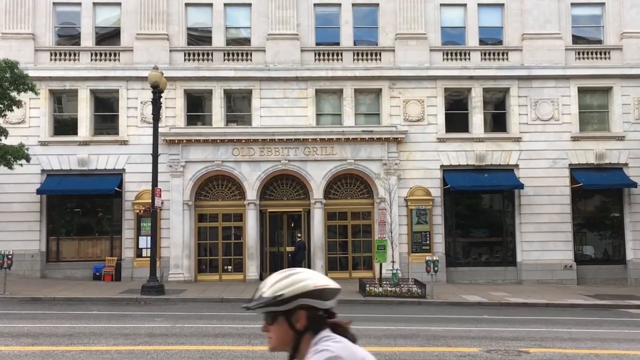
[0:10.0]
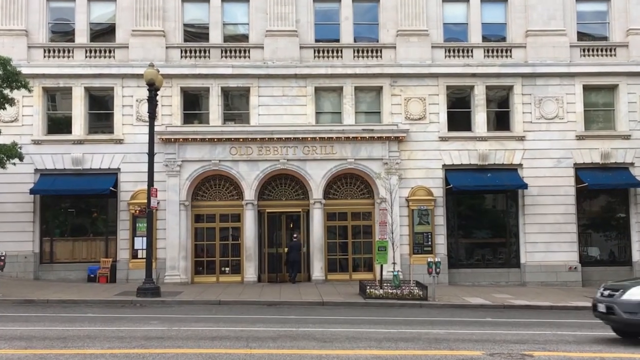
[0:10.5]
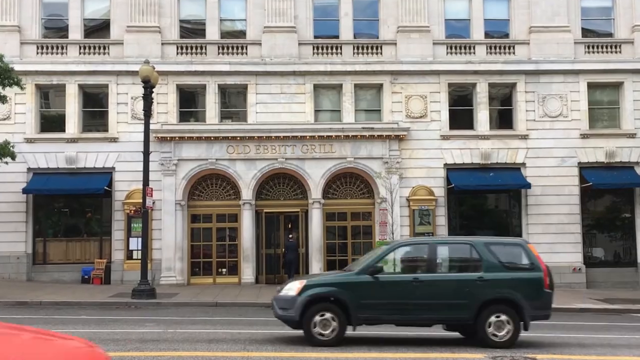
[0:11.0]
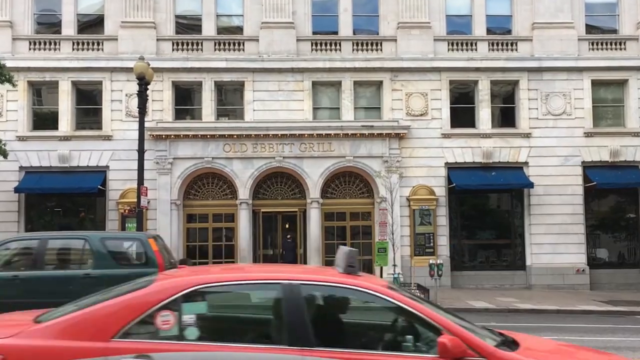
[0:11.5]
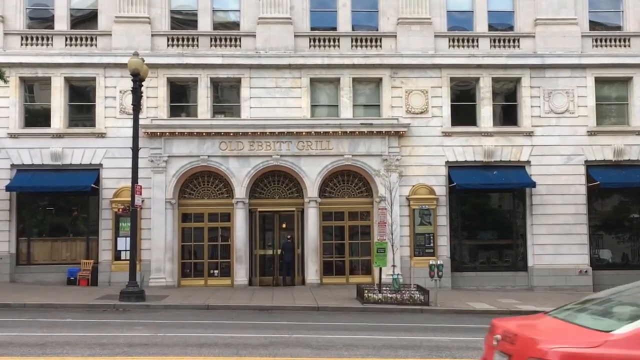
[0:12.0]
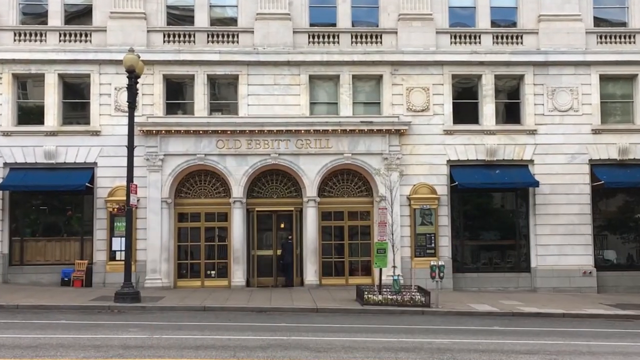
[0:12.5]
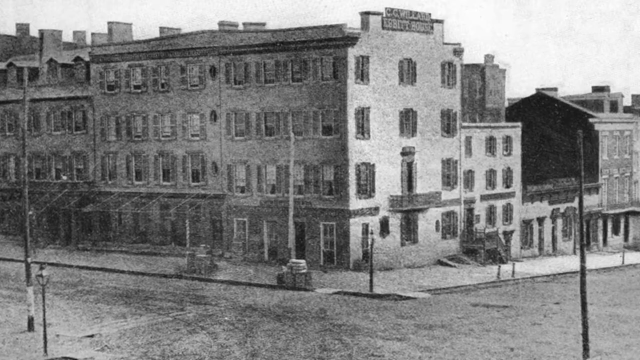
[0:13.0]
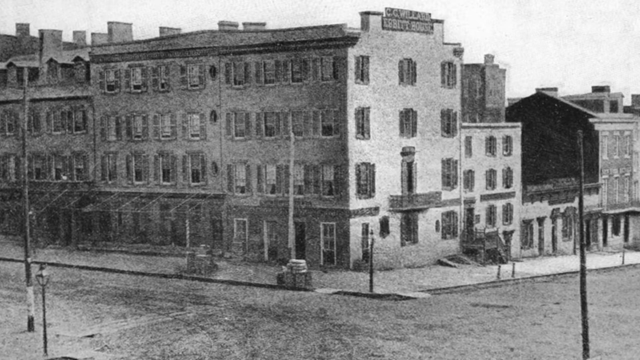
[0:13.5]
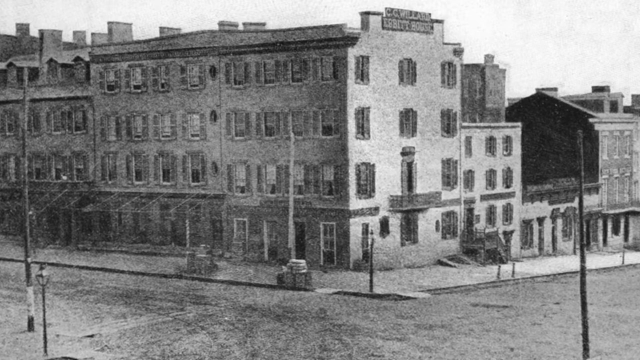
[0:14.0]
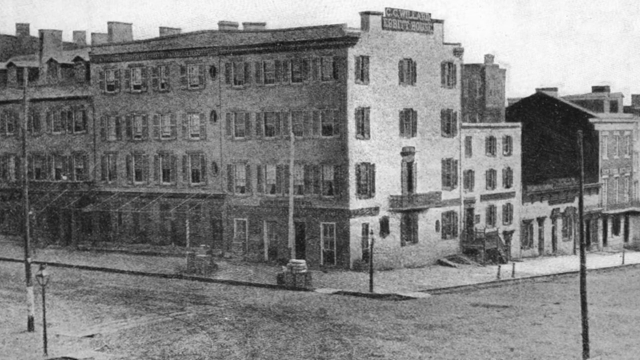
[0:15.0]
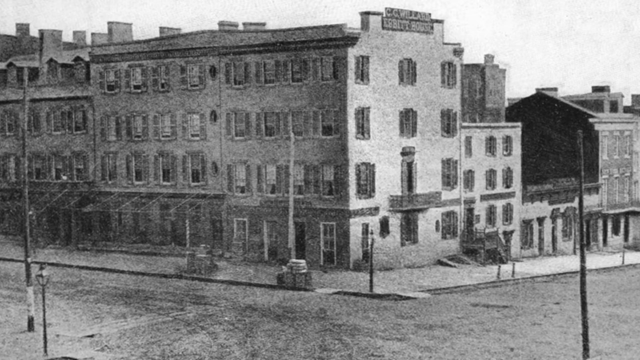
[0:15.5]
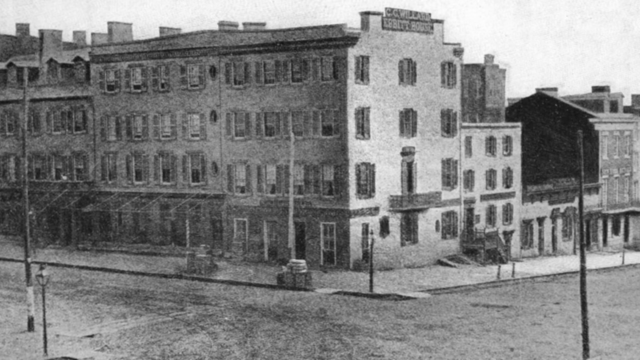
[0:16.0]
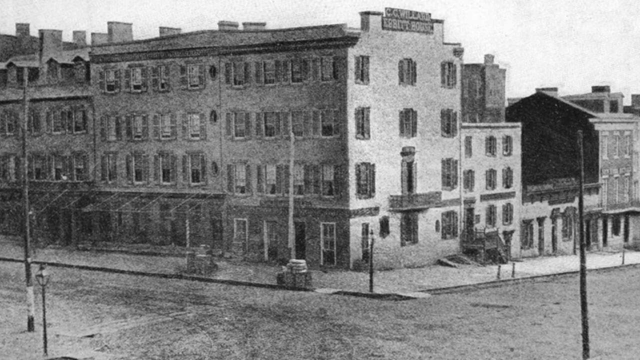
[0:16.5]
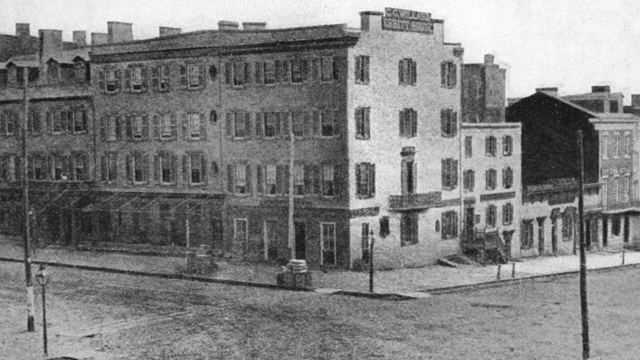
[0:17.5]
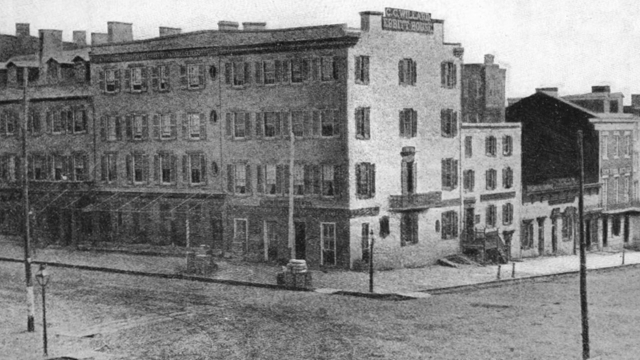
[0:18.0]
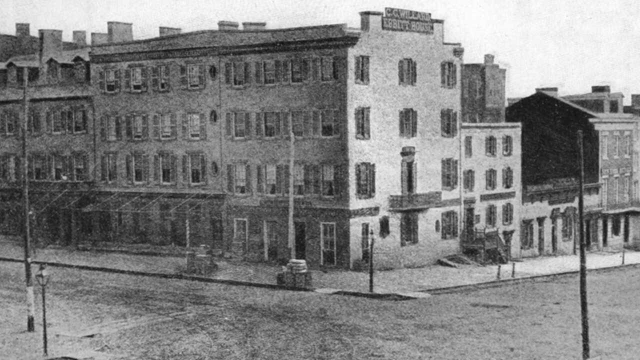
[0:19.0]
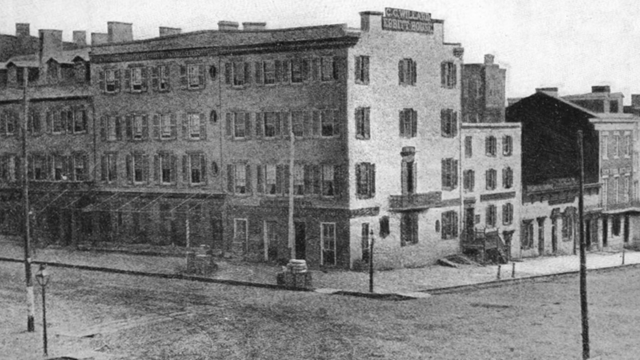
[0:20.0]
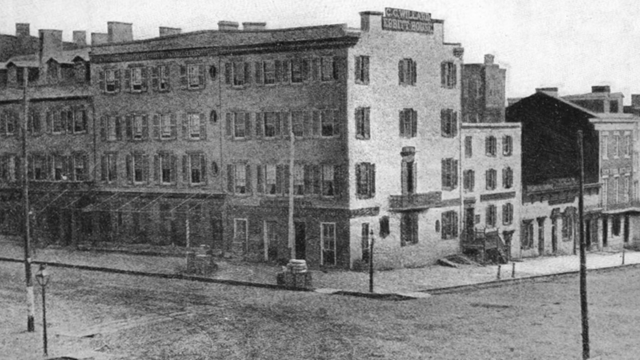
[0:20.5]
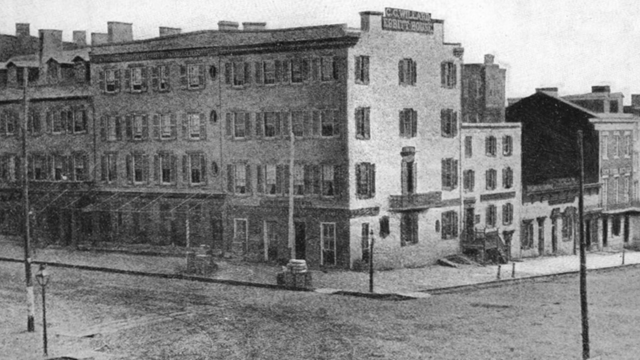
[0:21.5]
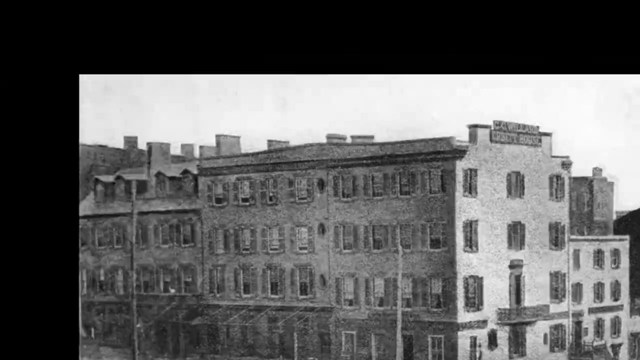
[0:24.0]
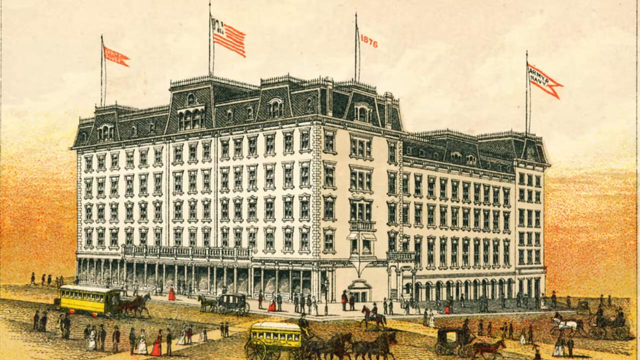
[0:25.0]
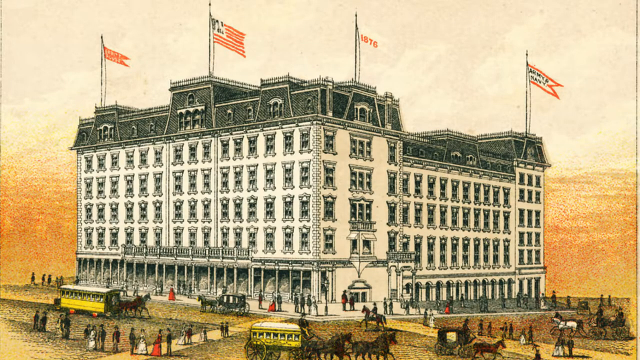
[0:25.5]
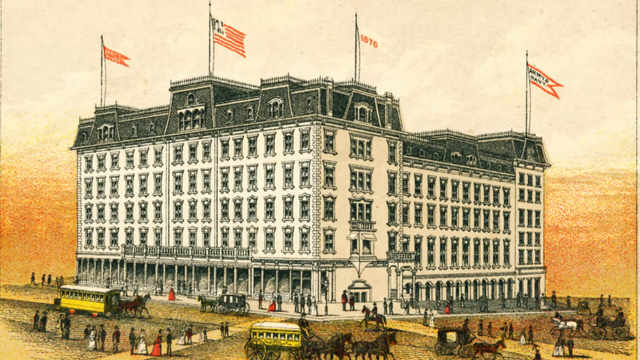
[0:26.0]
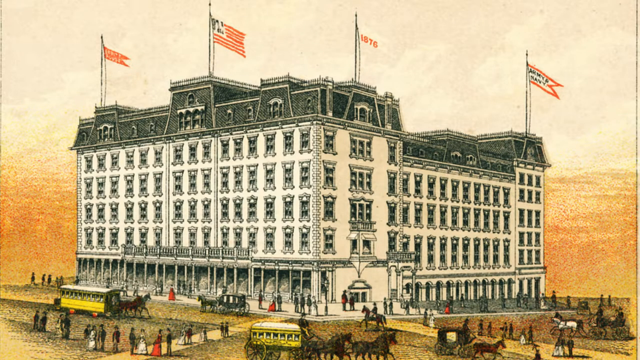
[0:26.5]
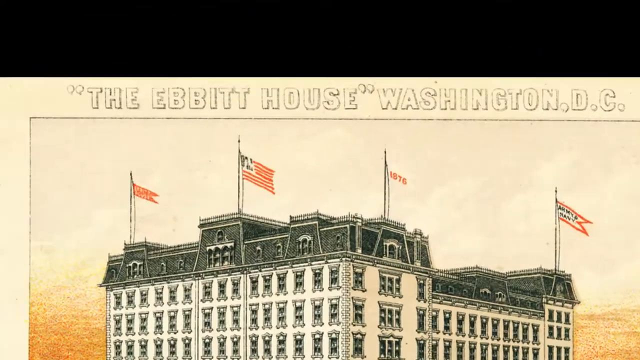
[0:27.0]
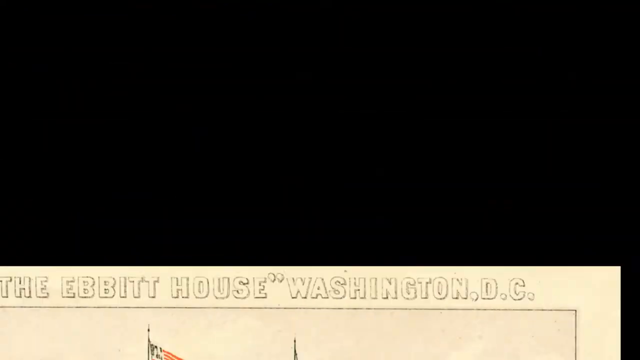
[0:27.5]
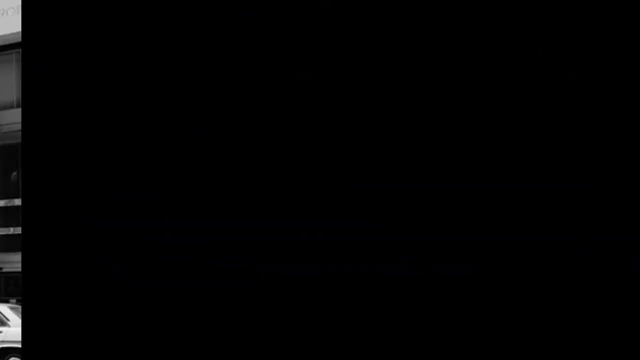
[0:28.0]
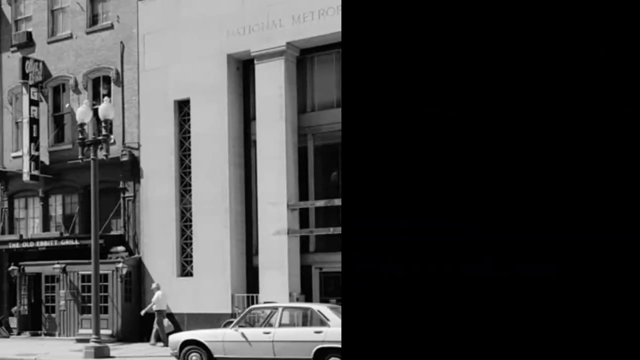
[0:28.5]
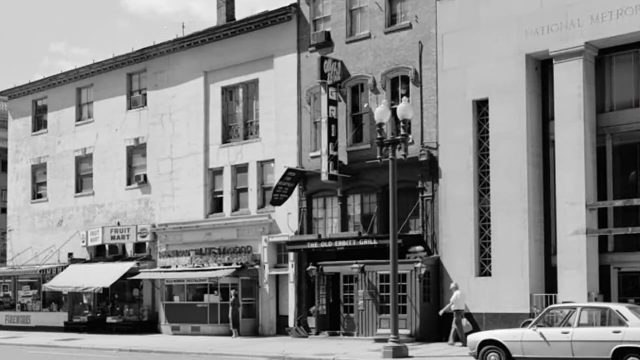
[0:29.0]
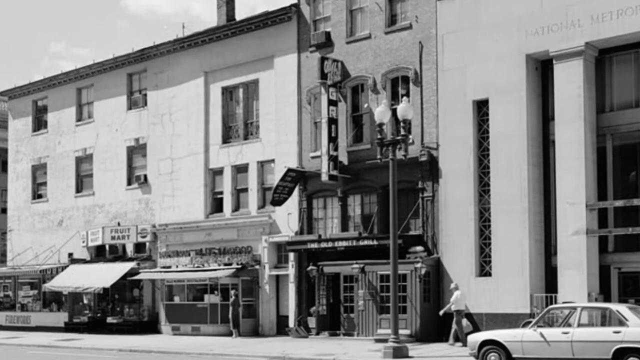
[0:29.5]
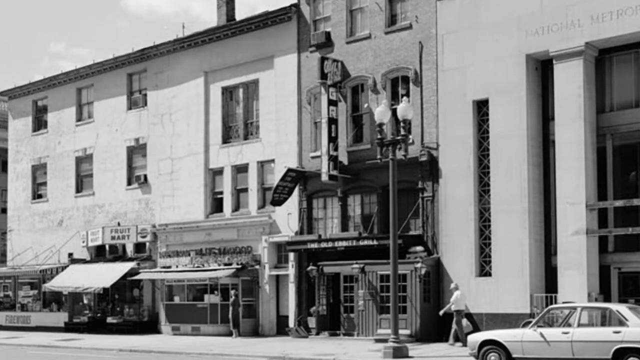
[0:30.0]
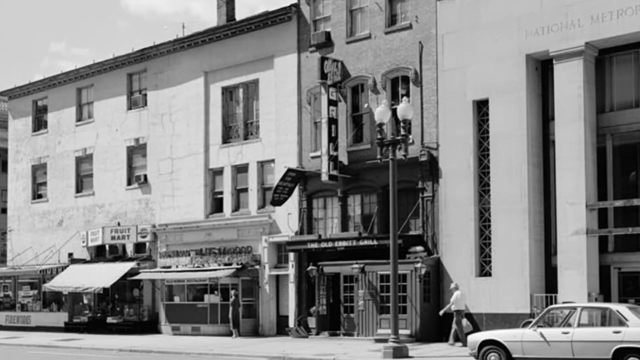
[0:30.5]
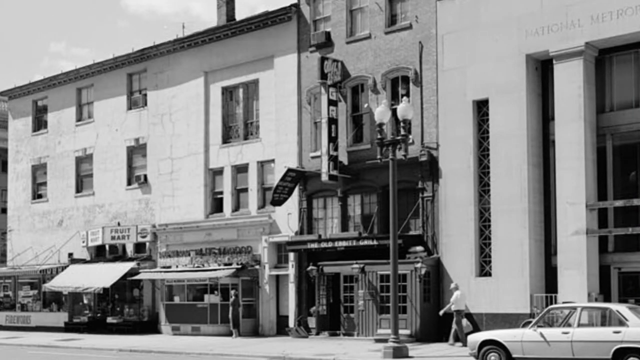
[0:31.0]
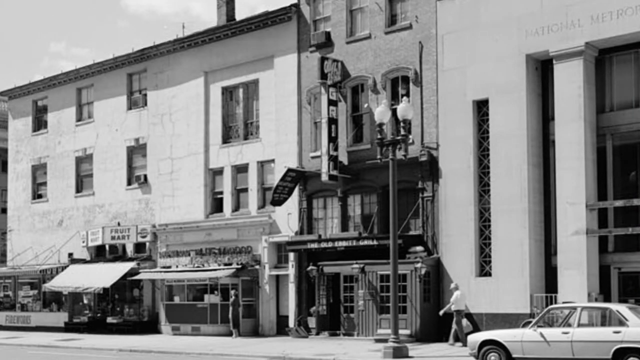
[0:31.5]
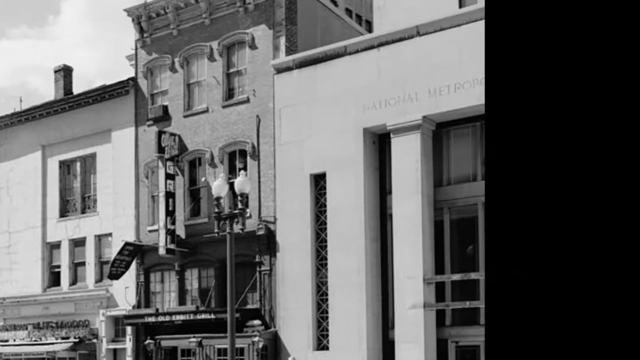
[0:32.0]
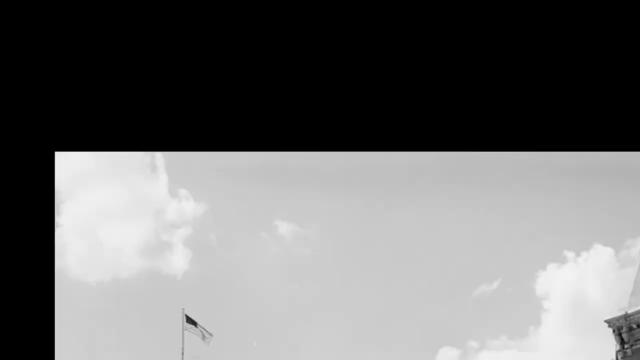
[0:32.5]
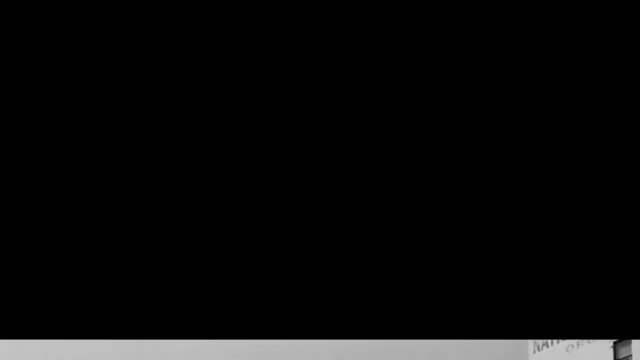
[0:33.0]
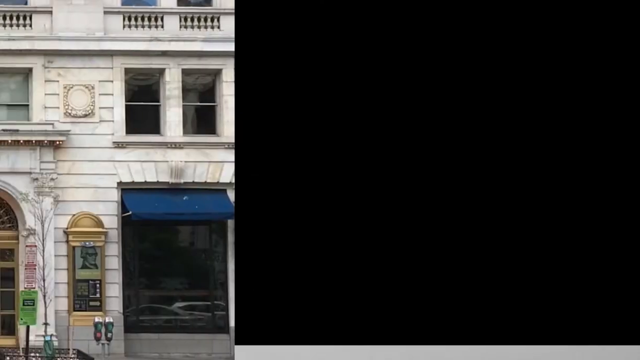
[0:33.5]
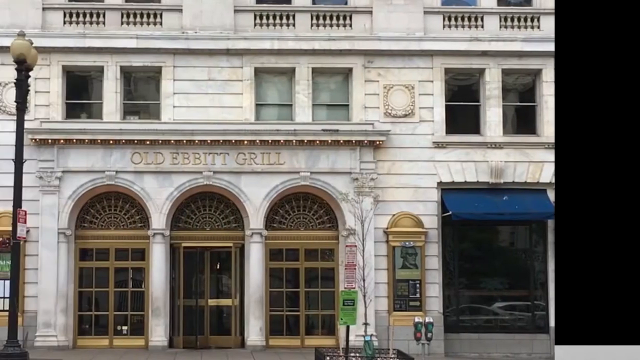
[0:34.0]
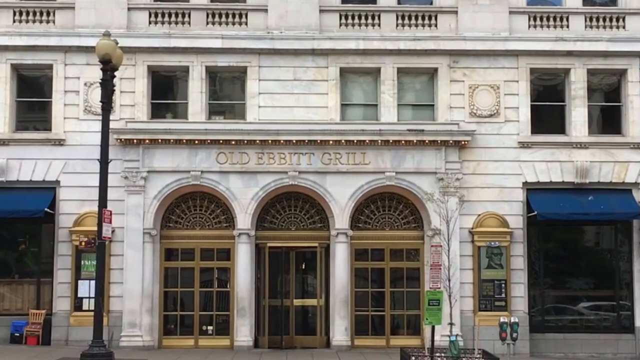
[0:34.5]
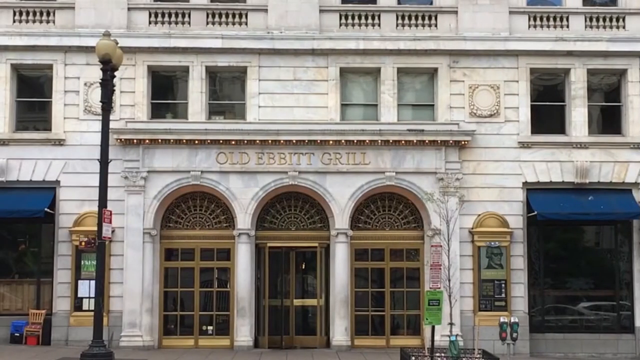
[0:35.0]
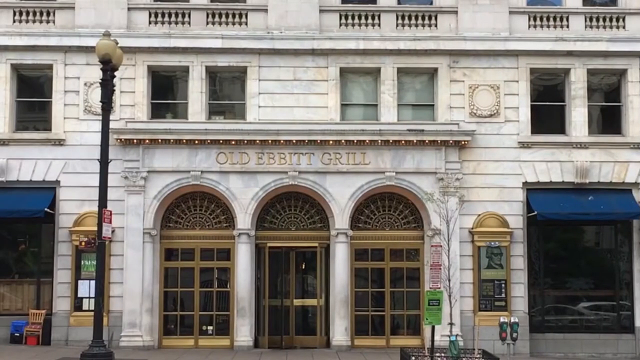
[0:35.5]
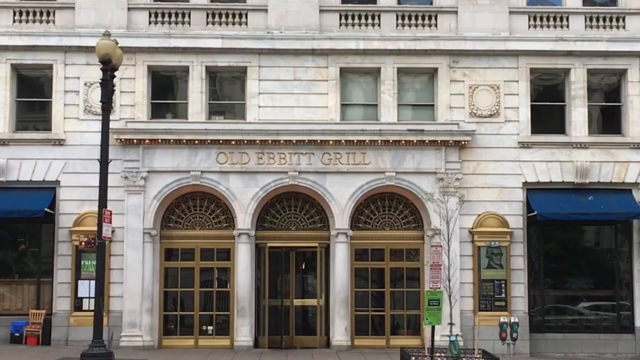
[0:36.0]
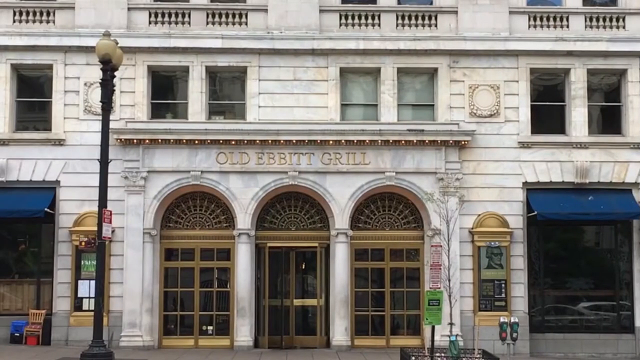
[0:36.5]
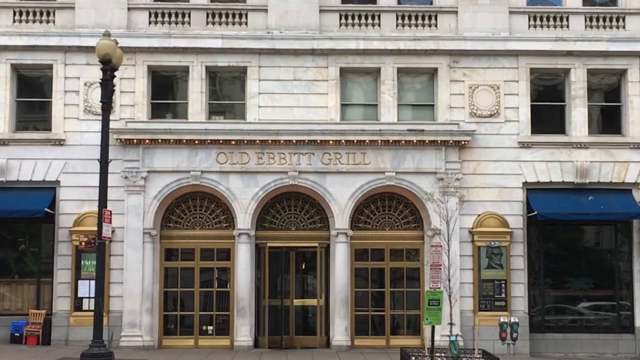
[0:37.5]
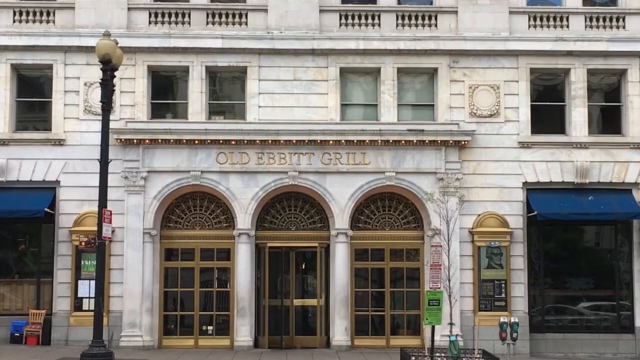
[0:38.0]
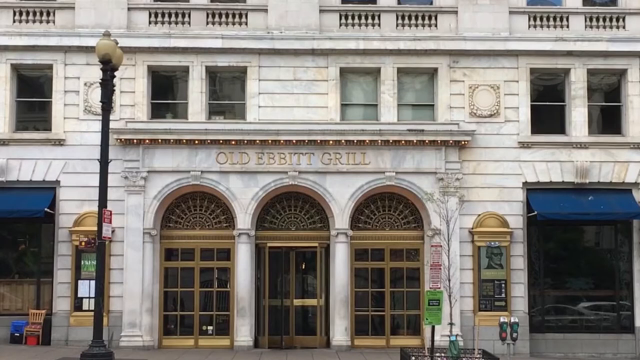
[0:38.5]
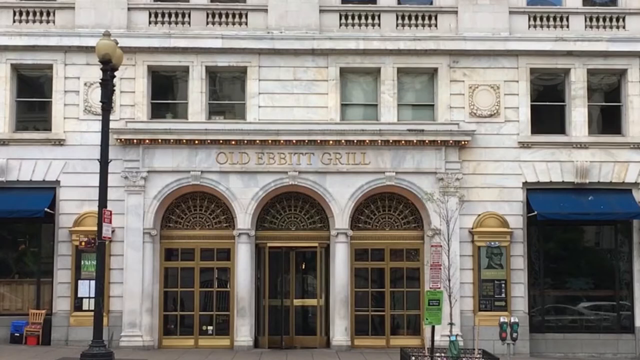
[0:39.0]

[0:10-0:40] The Old Ebbet Grill appears as it is in modern day, with its white exterior, windows and blue window shades. The video then switches to an older drawing or sketch, presumably of the Old Ebbet building, which stands on the corner of two streets. Seen zoomed out, it looks to be about four stories tall, with several windows on both the front and side walls, and the other buildings nearby are very close. A second sketched image follows that looks more intensely drawn; it has more windows, possibly indicating renovations, and the roof area seems to have a more elaborate exterior. Next comes a photo instead of a sketch, which appears to show the white exterior. Finally, the last image comes back into focus: the modern-day facade of the building. The sketches and photos seem to share similar themes: the building's exterior is white and there are many windows.